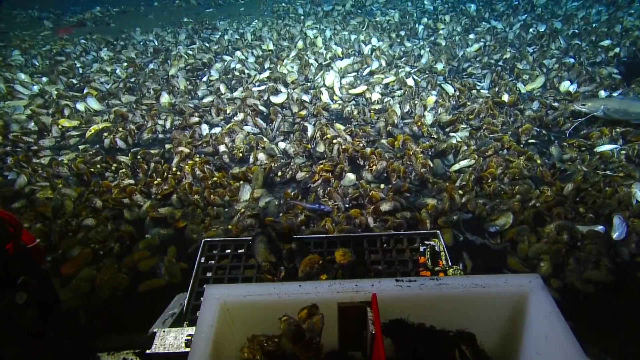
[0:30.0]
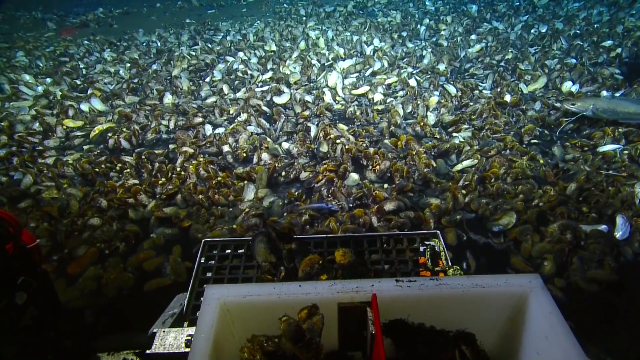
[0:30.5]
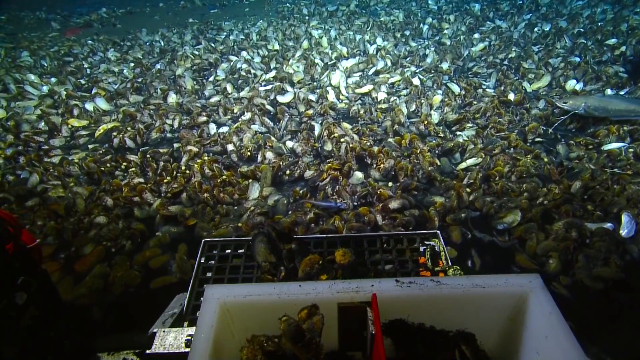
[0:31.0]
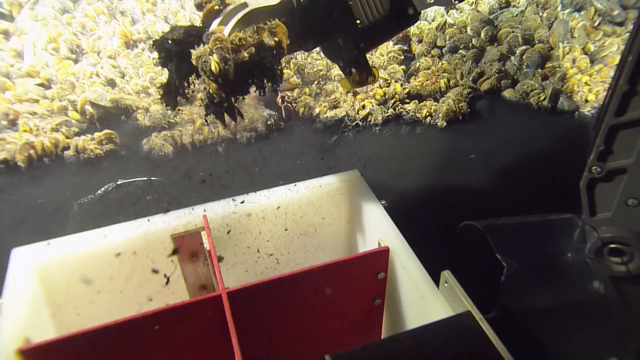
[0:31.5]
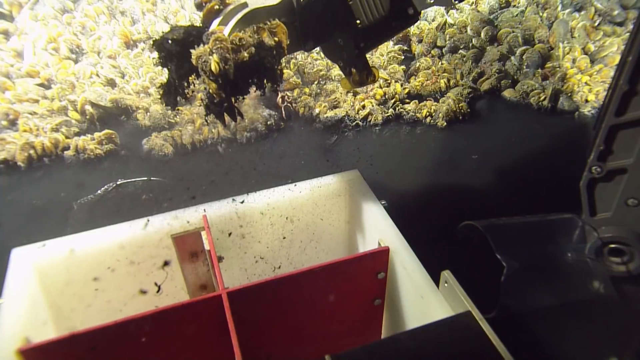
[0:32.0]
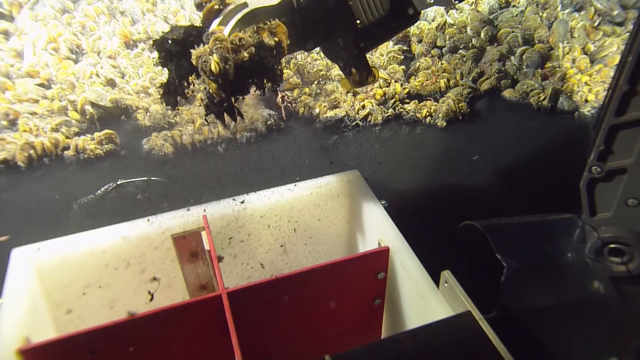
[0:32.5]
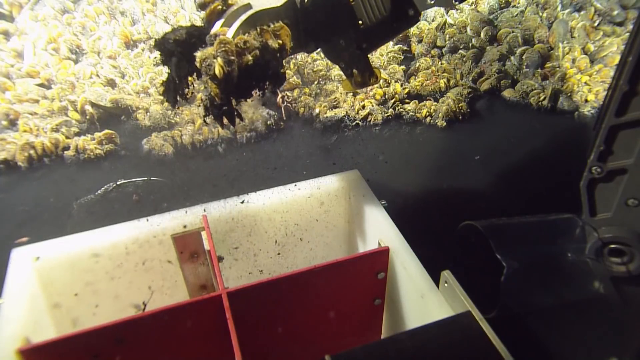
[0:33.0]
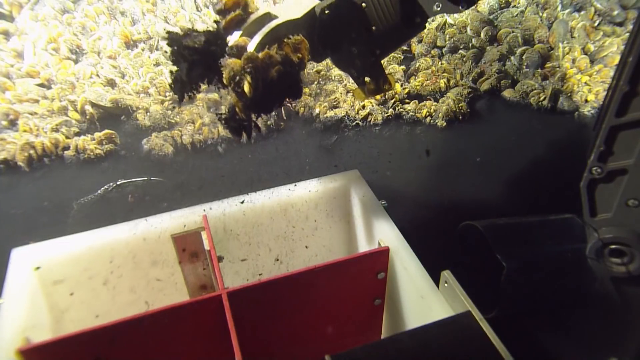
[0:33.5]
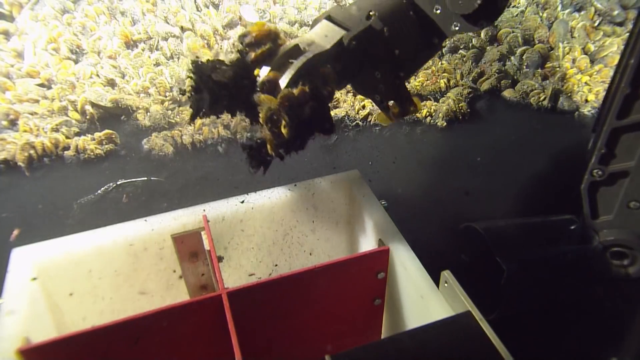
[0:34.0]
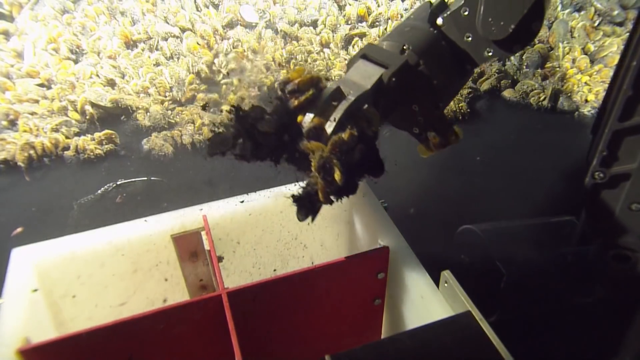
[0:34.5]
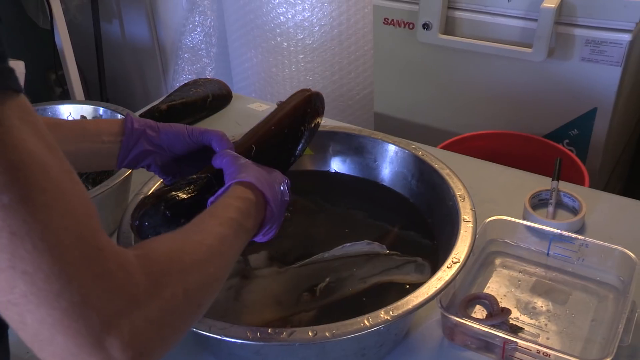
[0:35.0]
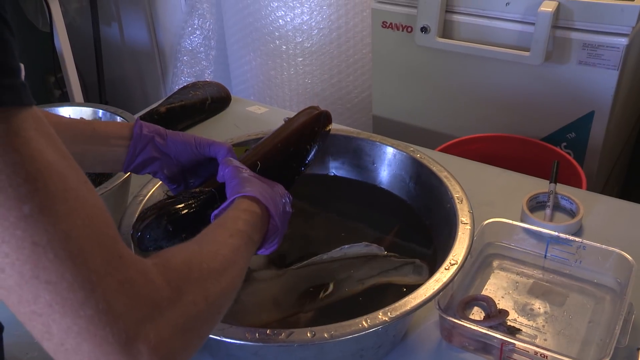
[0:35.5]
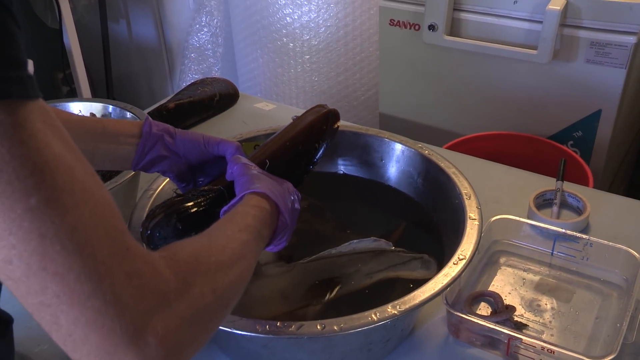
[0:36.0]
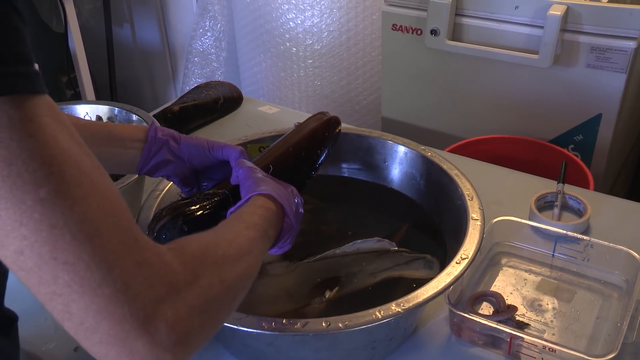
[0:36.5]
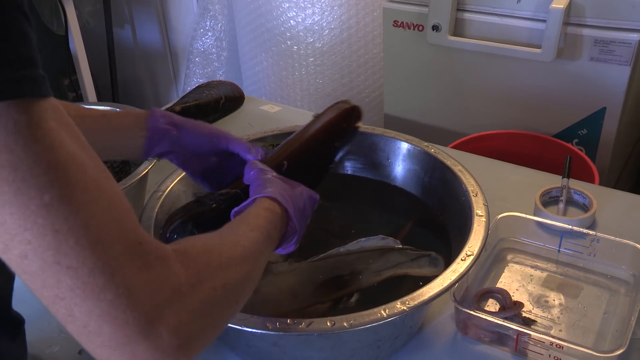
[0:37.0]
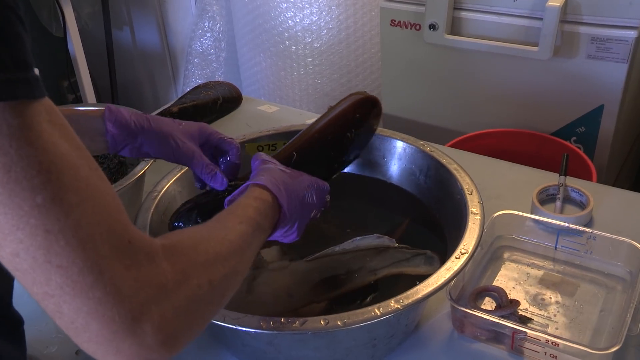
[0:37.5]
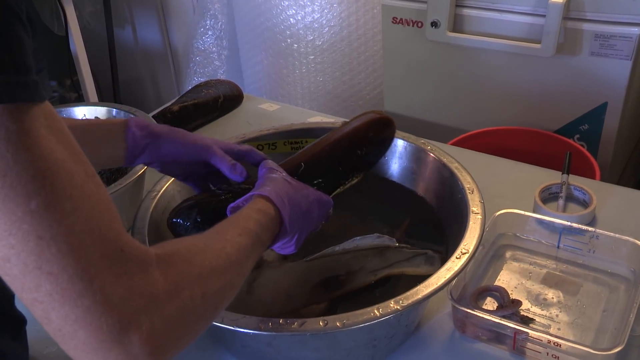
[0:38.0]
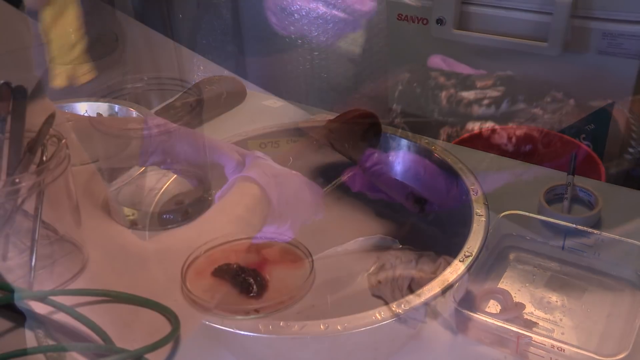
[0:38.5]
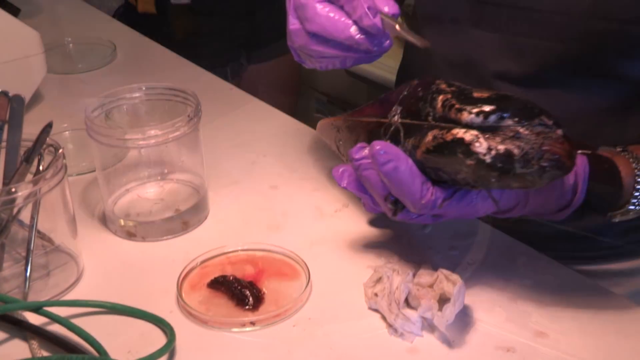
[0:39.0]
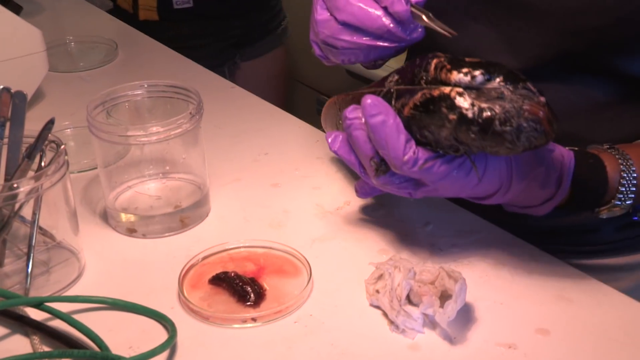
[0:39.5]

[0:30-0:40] The ocean floor appears to be covered in shells. Some kind of cloth picks up a bunch of growths that almost look like clumpy seaweed, and the robot arm deposits the clump into a white container. The container is divided into four quadrants by a red sheet of metal shaped like an X. Someone's hands in purple gloves hold a giant sea creature of sorts that almost looks like an elongated muscle, and they use tweezers to pick pieces off of it.